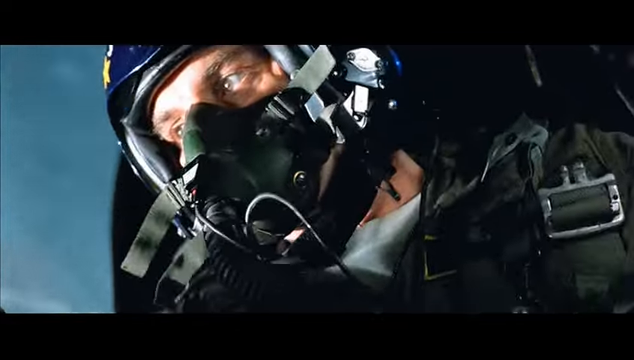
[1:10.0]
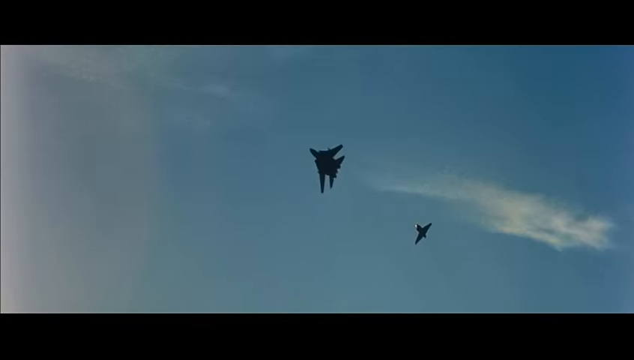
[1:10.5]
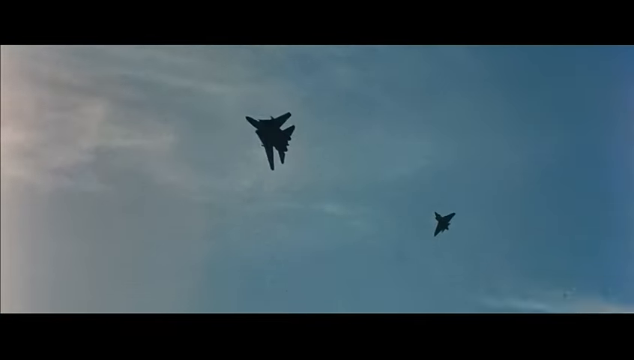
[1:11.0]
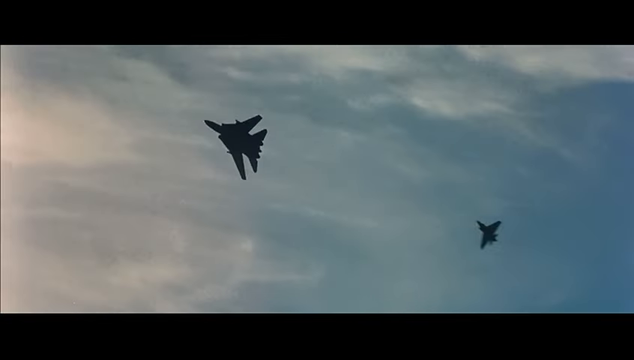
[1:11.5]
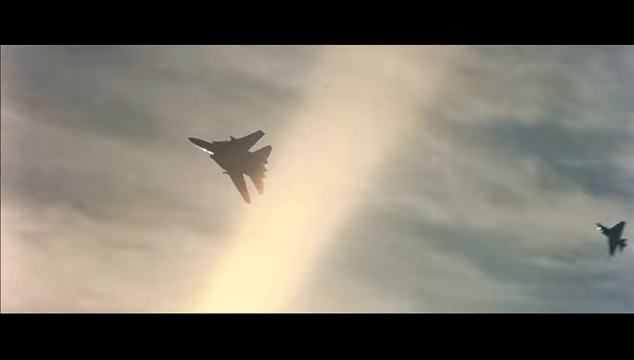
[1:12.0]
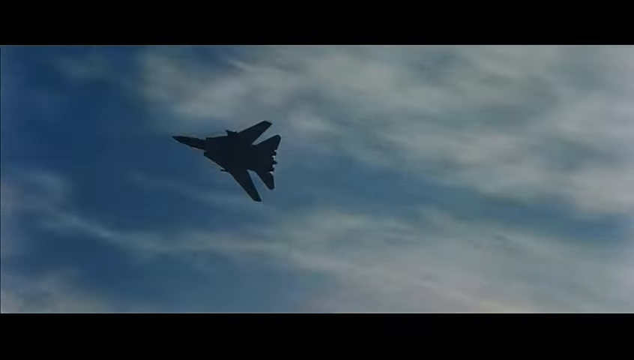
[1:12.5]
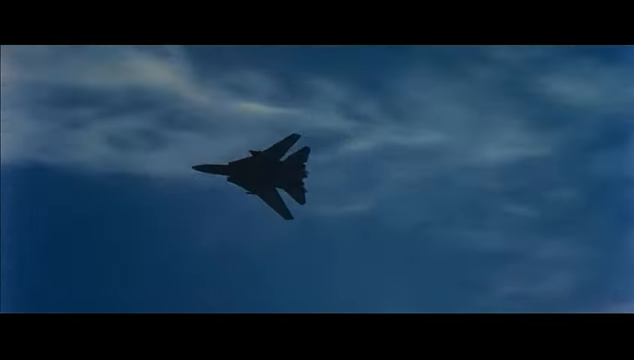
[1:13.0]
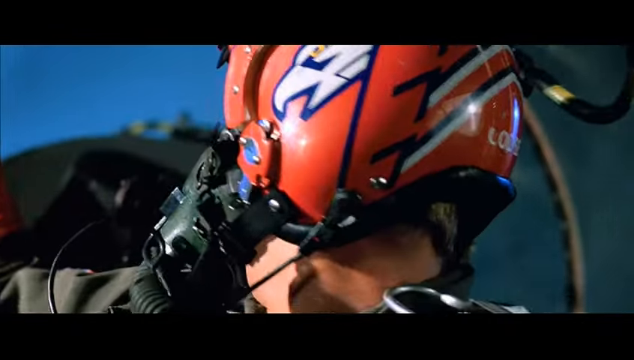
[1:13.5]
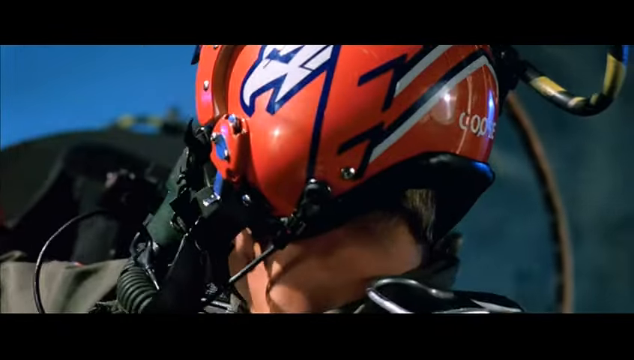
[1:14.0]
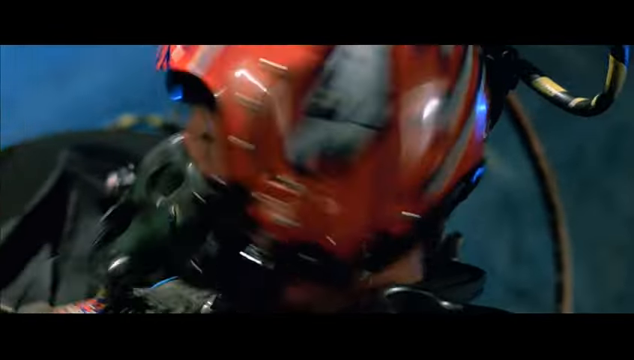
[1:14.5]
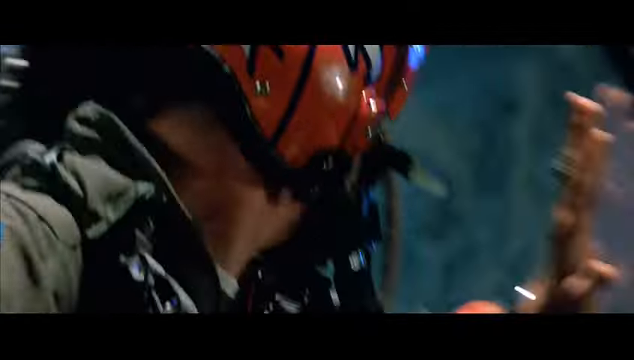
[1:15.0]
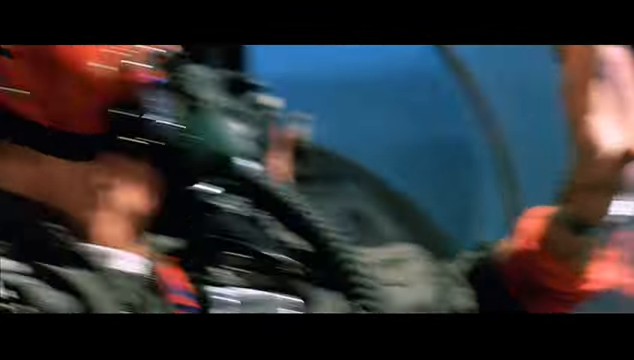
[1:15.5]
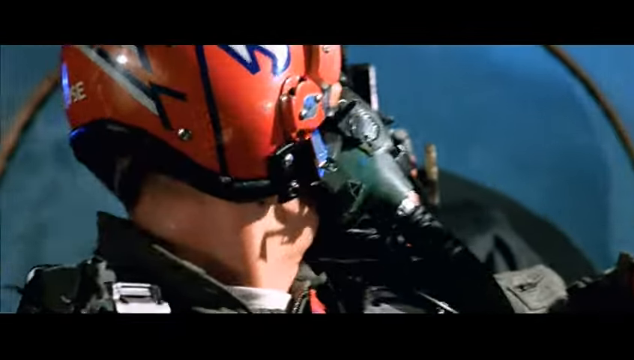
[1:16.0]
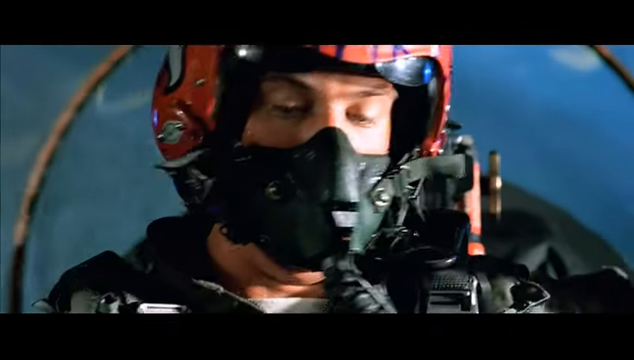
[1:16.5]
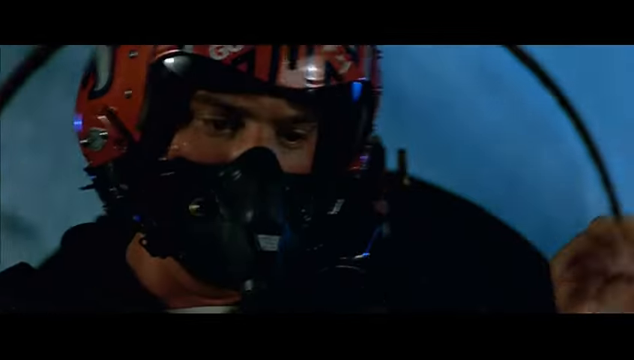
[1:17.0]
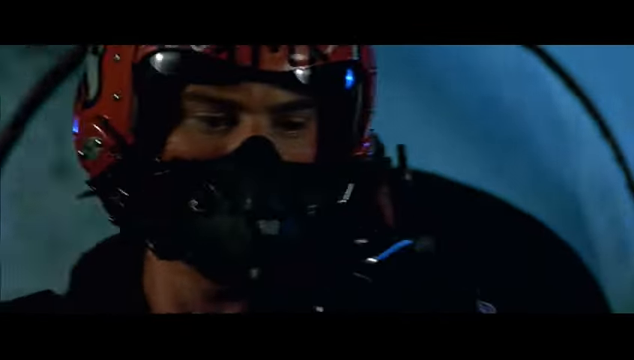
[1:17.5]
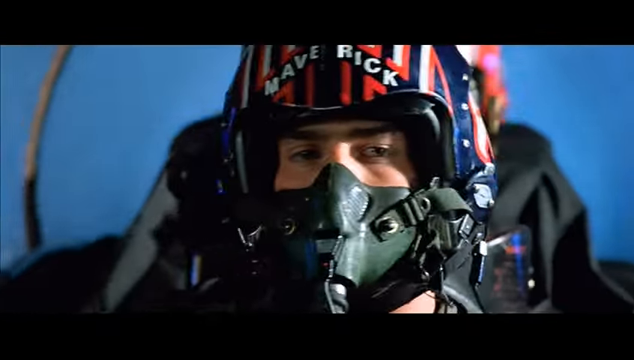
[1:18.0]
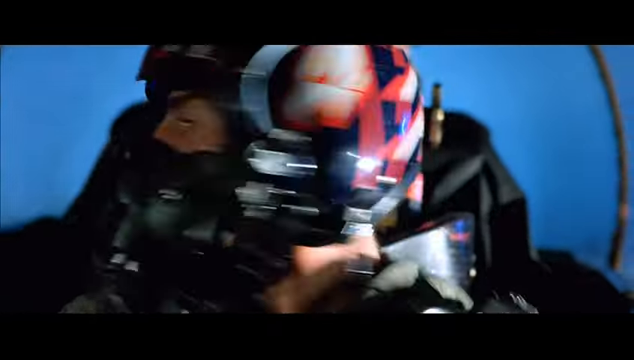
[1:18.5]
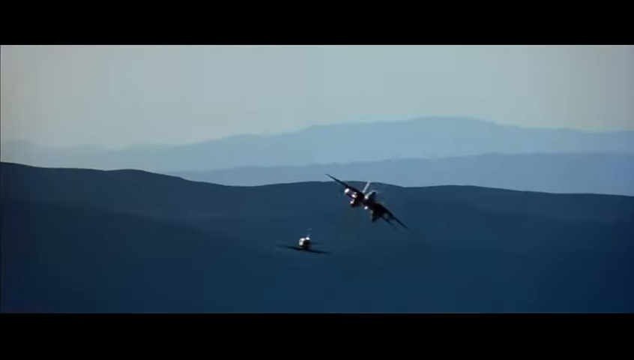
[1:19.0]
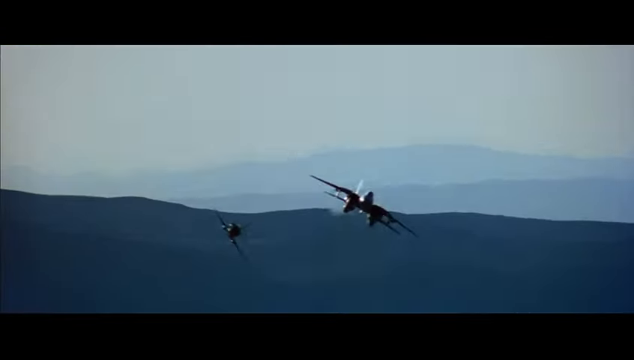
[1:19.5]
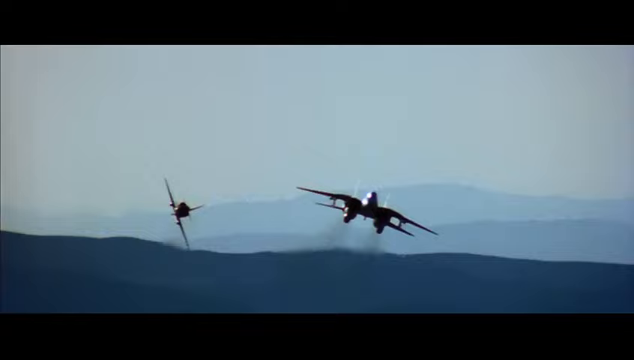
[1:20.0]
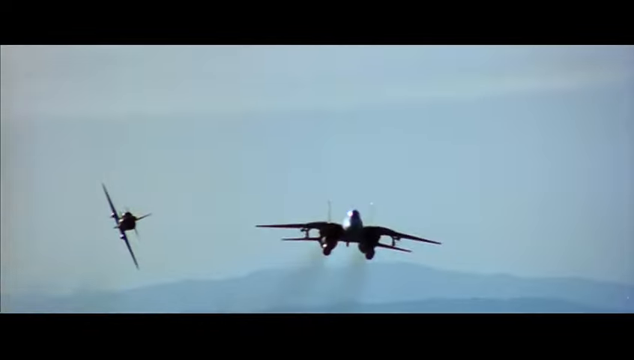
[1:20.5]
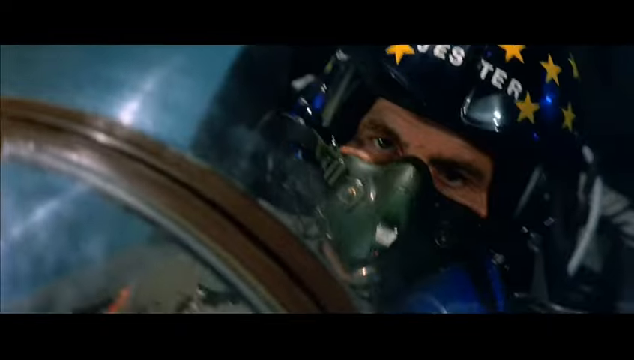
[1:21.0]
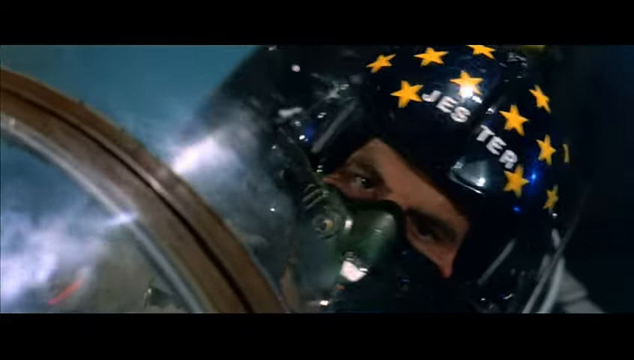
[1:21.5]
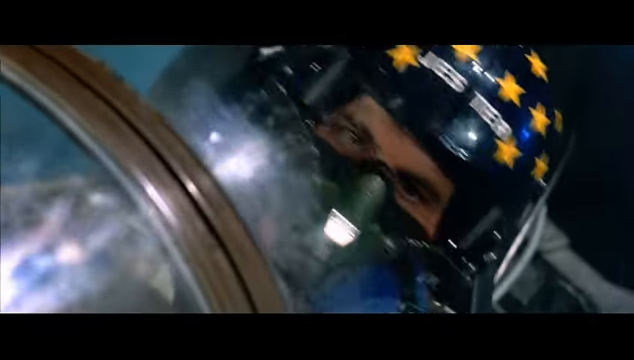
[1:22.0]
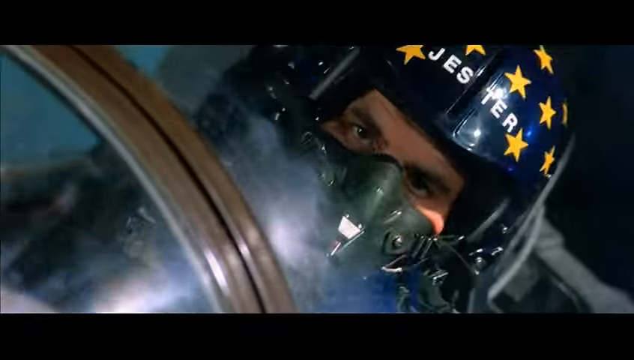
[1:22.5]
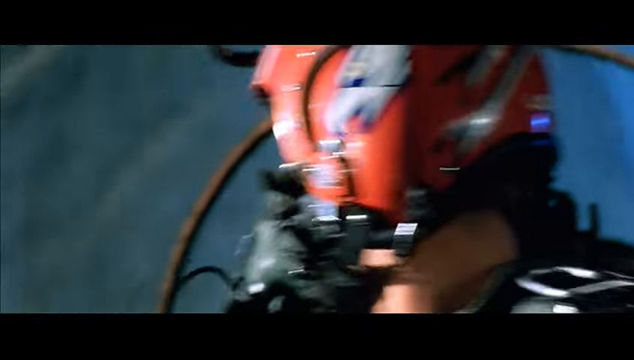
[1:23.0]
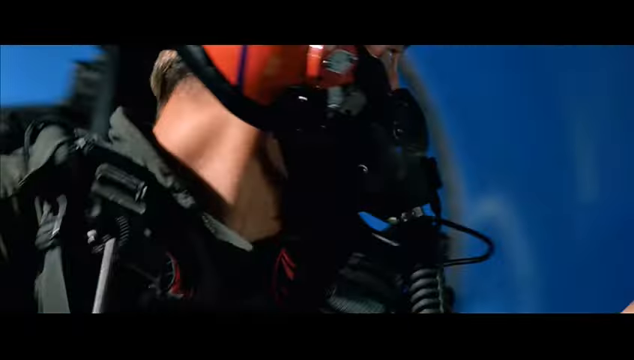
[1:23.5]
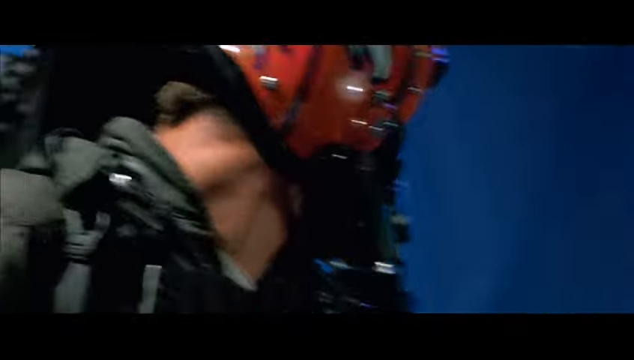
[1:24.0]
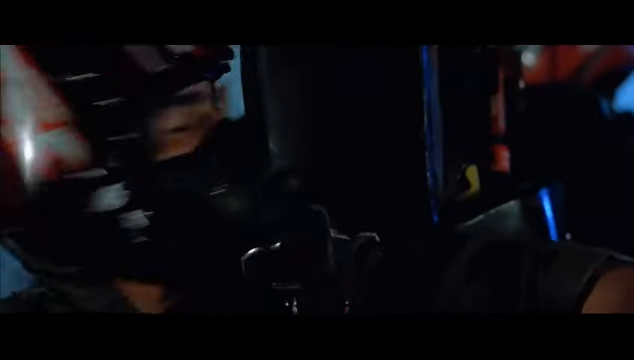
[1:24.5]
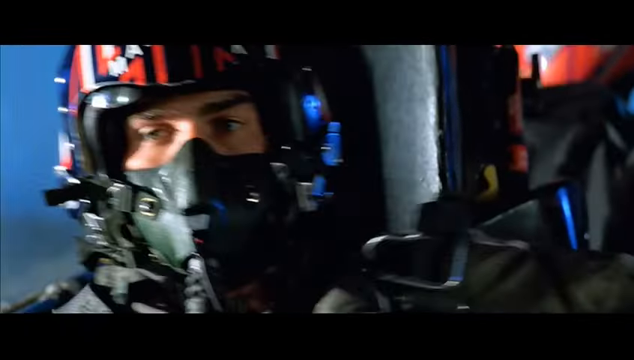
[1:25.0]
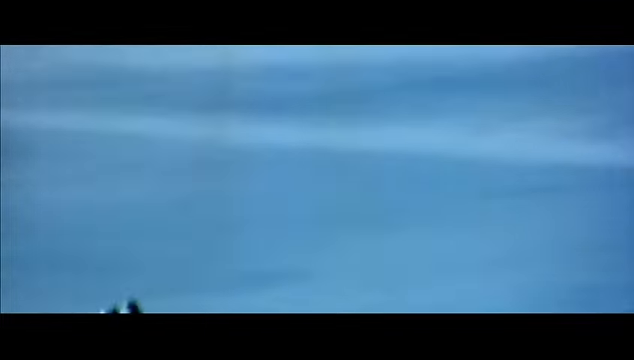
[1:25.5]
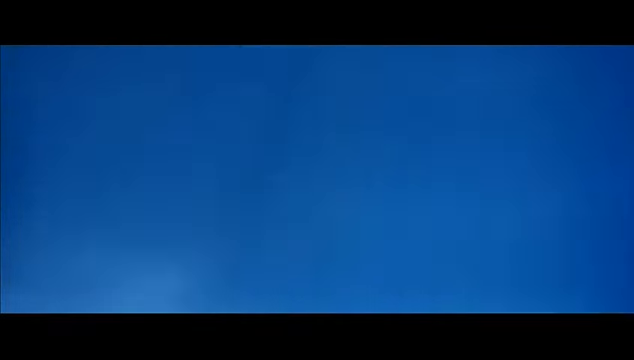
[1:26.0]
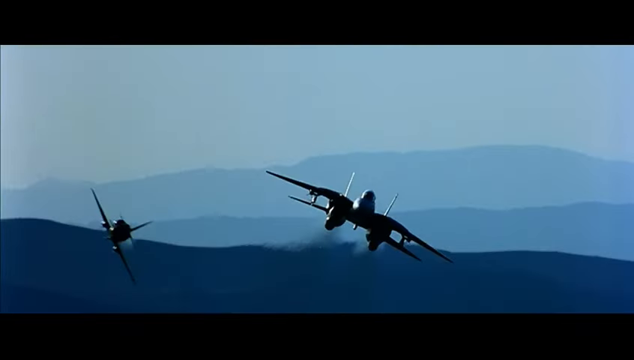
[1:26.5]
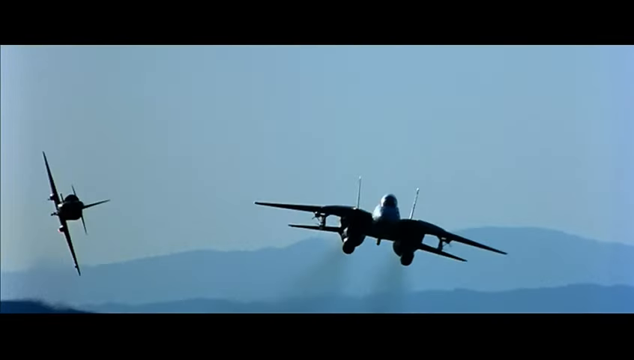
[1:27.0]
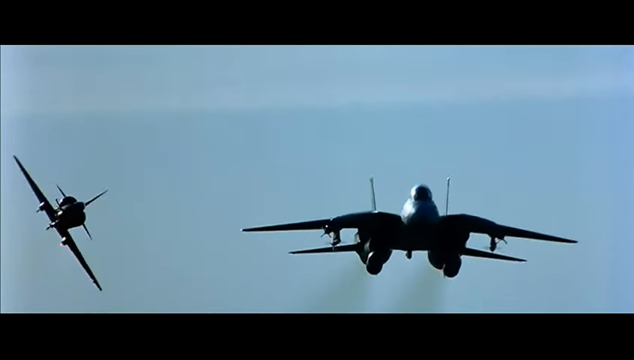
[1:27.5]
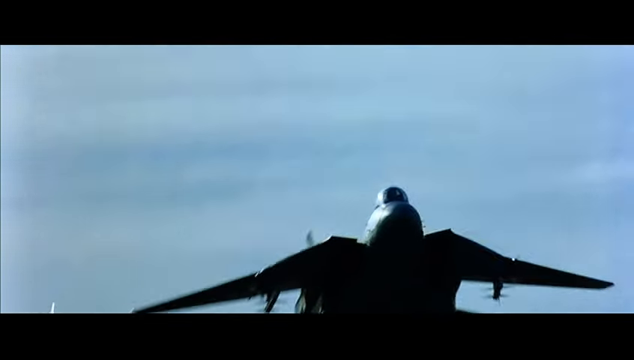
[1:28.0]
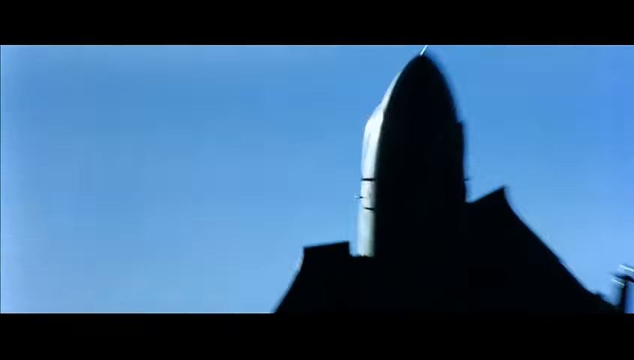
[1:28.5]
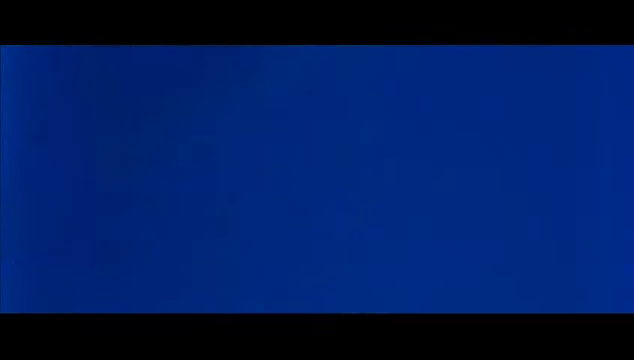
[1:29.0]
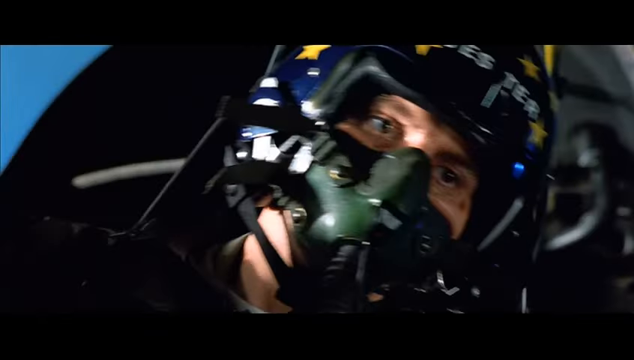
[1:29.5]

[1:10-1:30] Inside the cockpit of a fighter jet, the pilot wears a green oxygen mask, a buckle on his left shoulder and a blue helmet with yellow stars on it. Looking up from below, two fighter jets fly very close together against a blue sky with white clouds. Inside another cockpit, a pilot looks backwards; he wears a red helmet with white and black stripes, apparently with a drawing of a bird on its left side and the word "goose" written on the back. Blue sky is just visible to the left of the screen. The pilot watches something intently, places his left hand on the glass of the overhead canopy, then turns back around and looks centrally and down. Another pilot in a cockpit wears a blue, white and black helmet with "maverick" on it and a green oxygen mask, and looks behind him. Two fighter jets follow each other. Another pilot in a cockpit wears a helmet with the word "Jester" on it. The pilot with the red helmet looks left behind him, then turns and looks right behind him. Apparently from a pilot's point of view, targets appear on the screen as green circles and seem to be zeroing in on a plane.